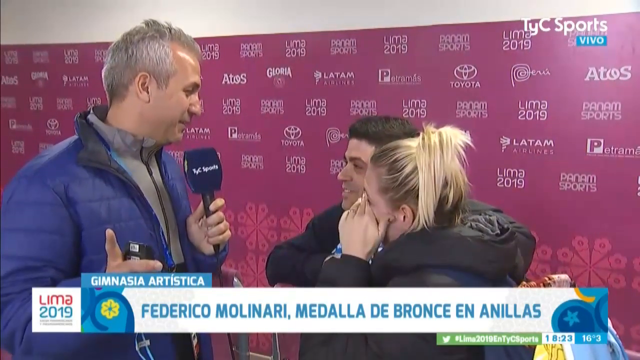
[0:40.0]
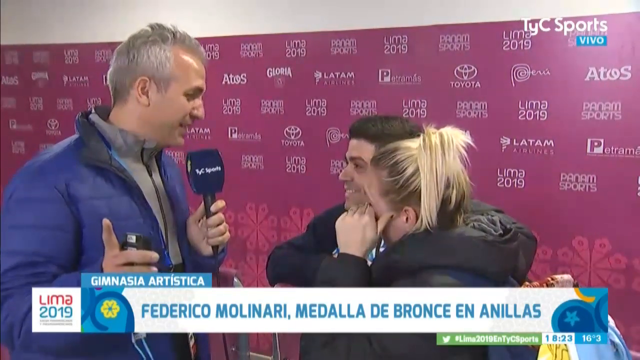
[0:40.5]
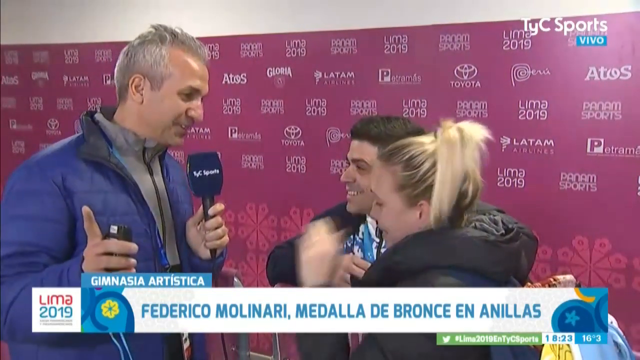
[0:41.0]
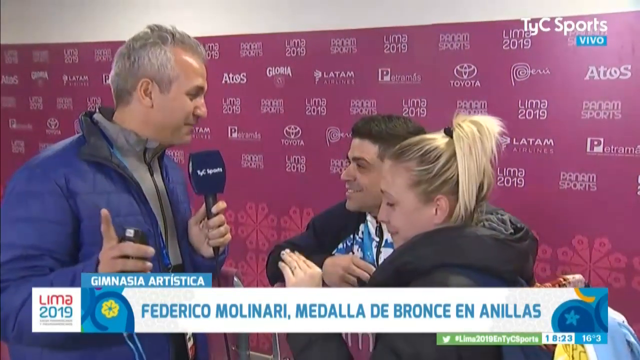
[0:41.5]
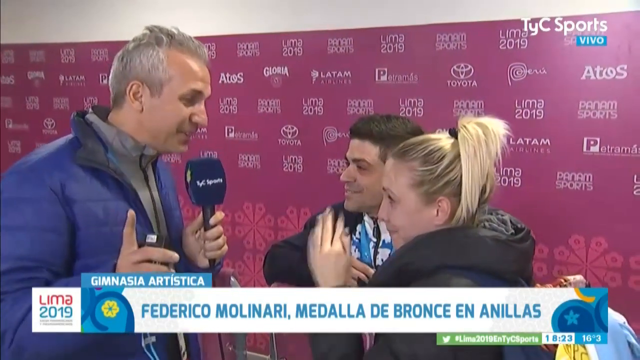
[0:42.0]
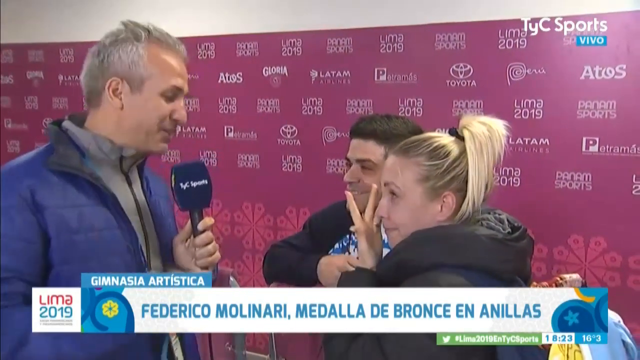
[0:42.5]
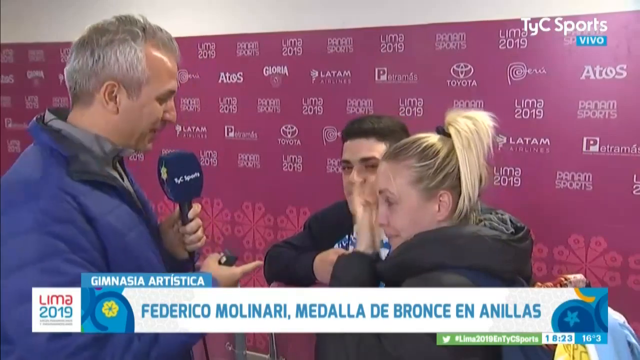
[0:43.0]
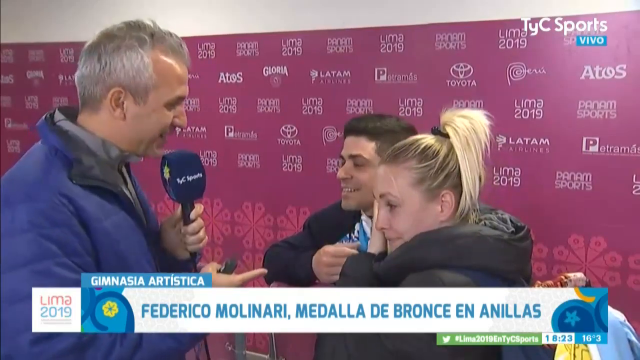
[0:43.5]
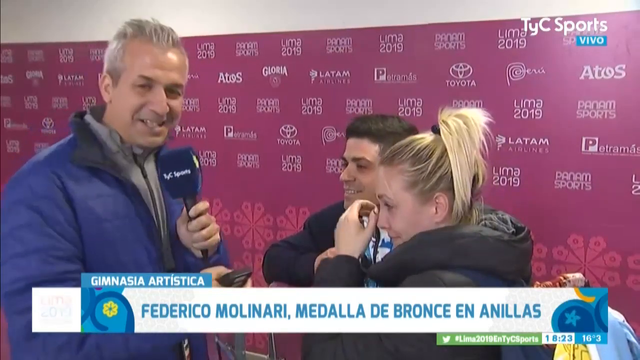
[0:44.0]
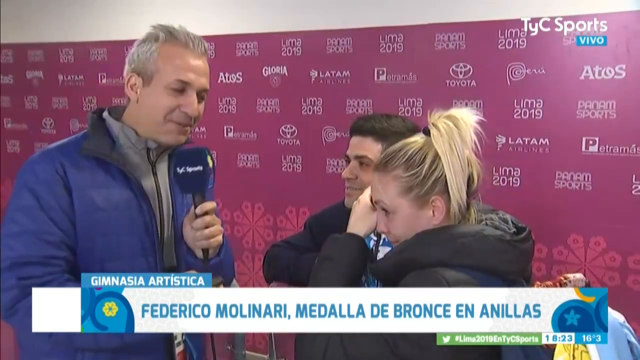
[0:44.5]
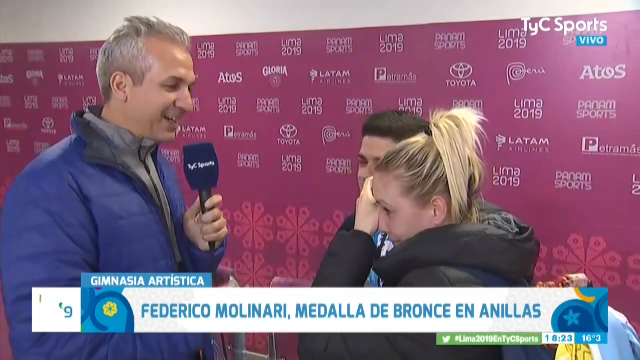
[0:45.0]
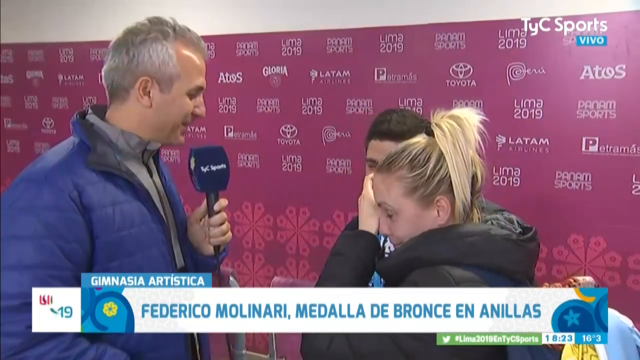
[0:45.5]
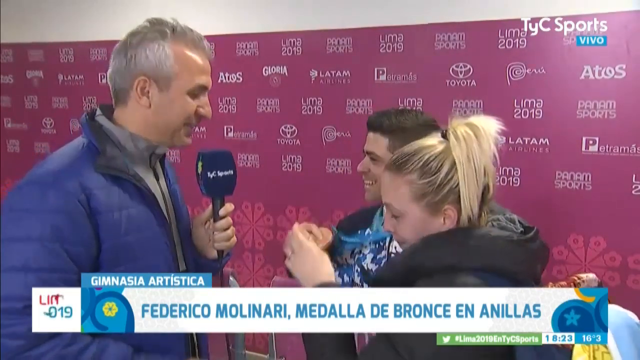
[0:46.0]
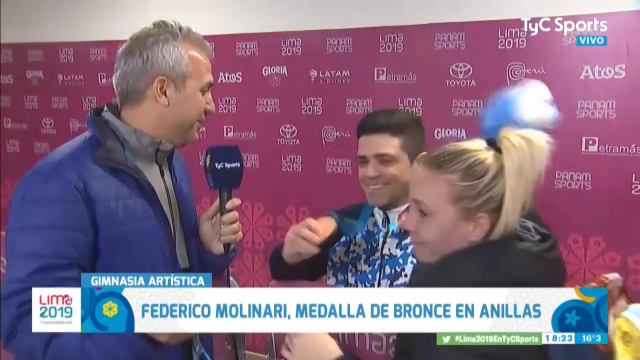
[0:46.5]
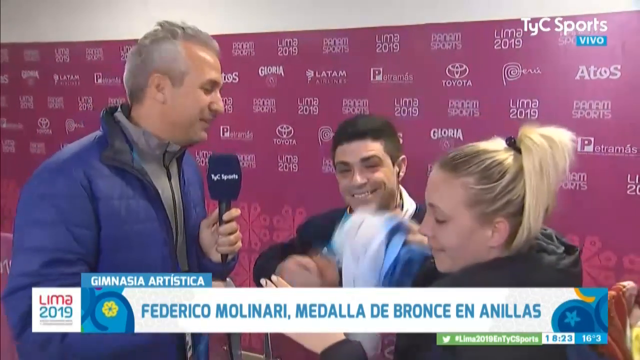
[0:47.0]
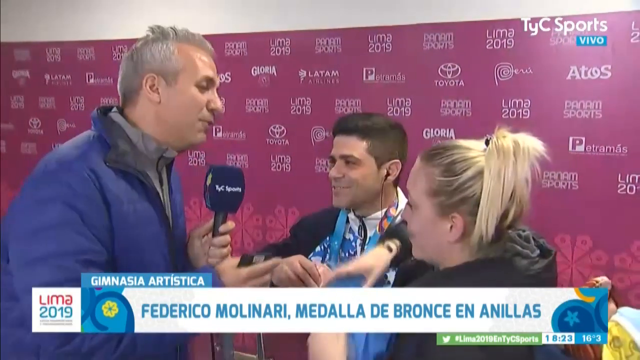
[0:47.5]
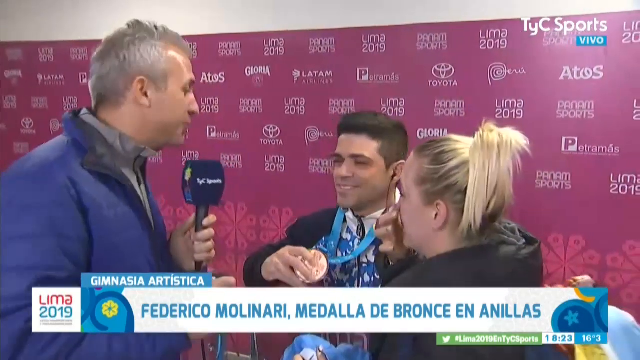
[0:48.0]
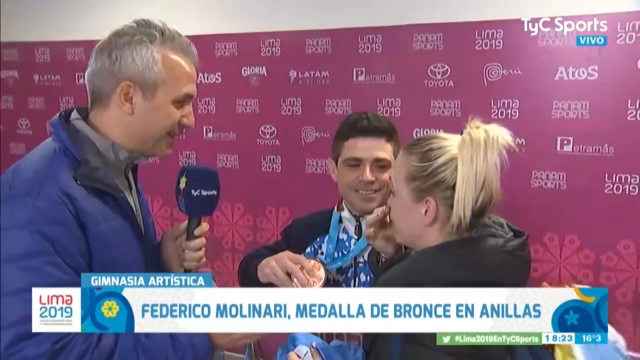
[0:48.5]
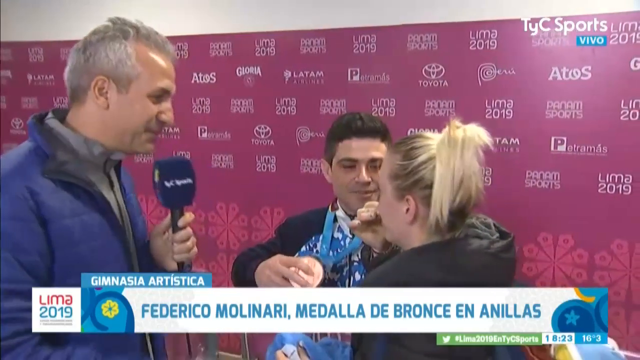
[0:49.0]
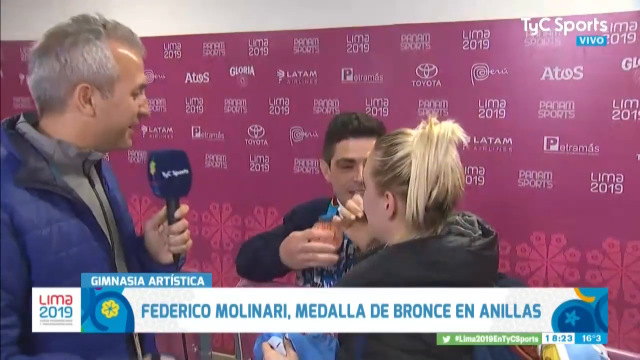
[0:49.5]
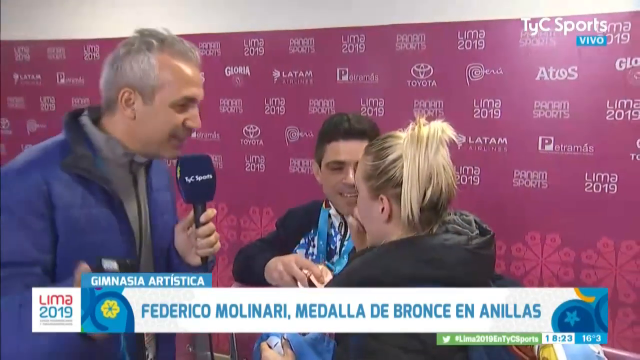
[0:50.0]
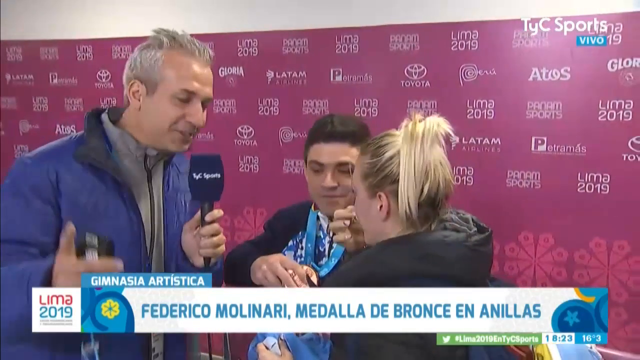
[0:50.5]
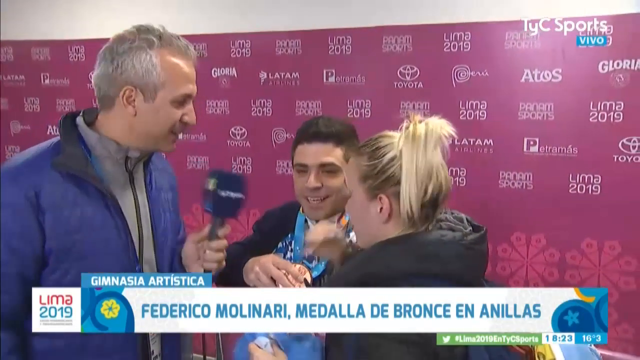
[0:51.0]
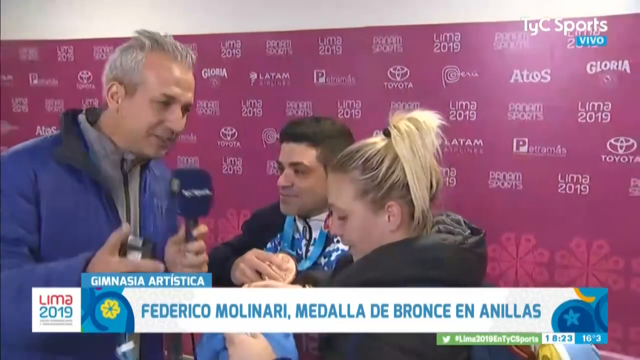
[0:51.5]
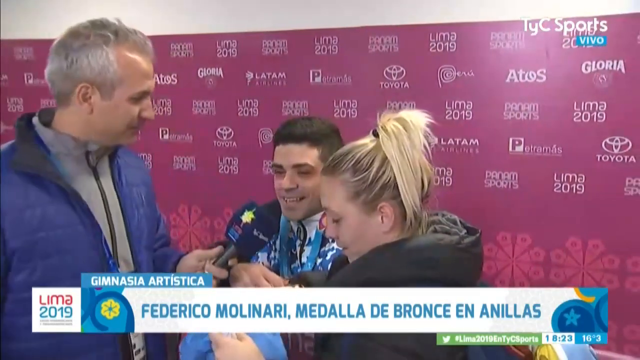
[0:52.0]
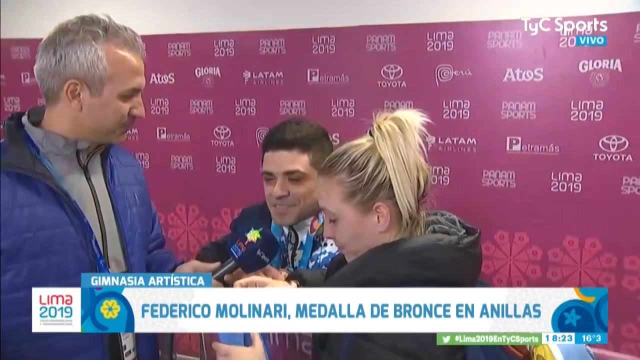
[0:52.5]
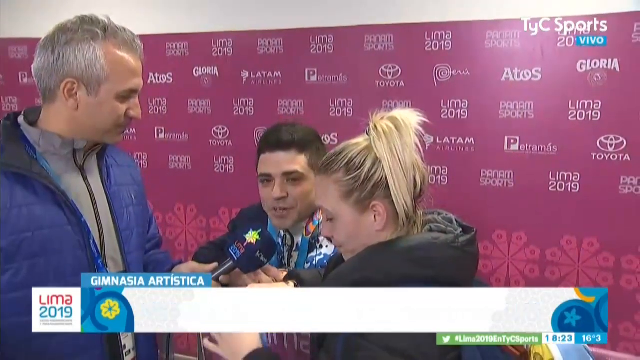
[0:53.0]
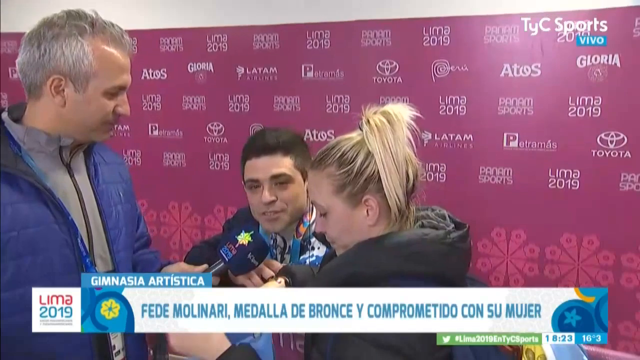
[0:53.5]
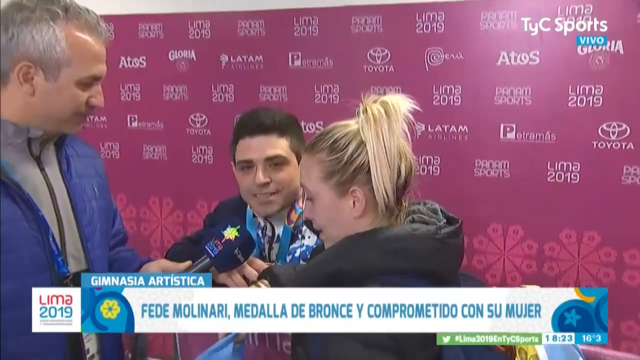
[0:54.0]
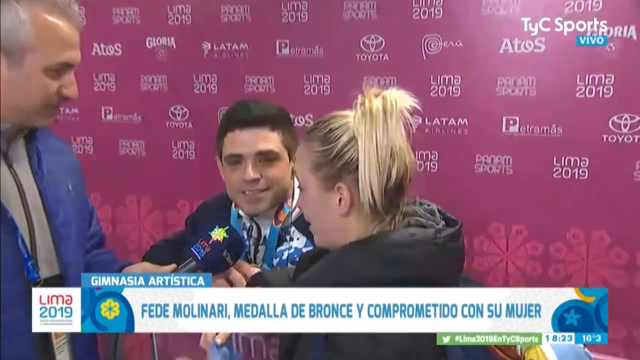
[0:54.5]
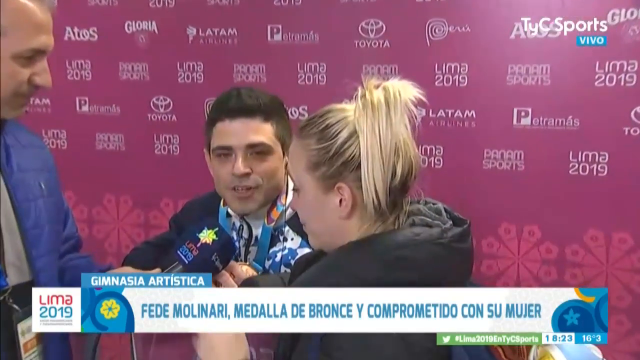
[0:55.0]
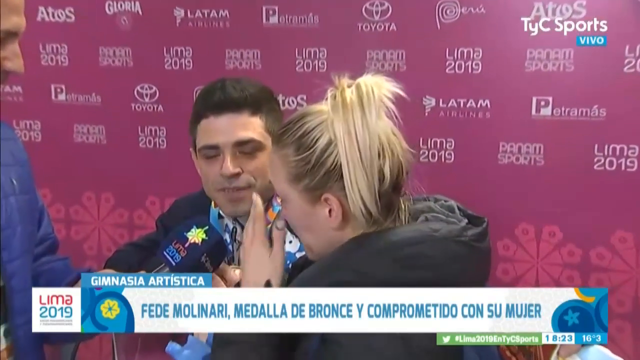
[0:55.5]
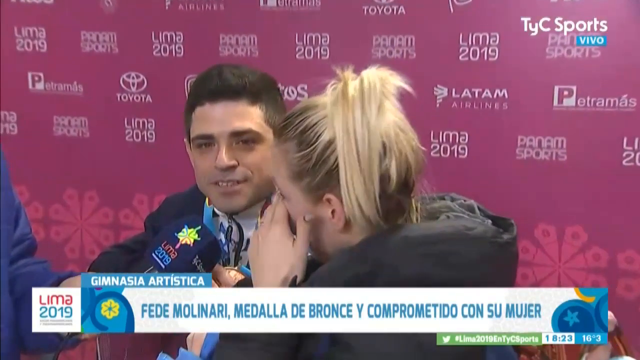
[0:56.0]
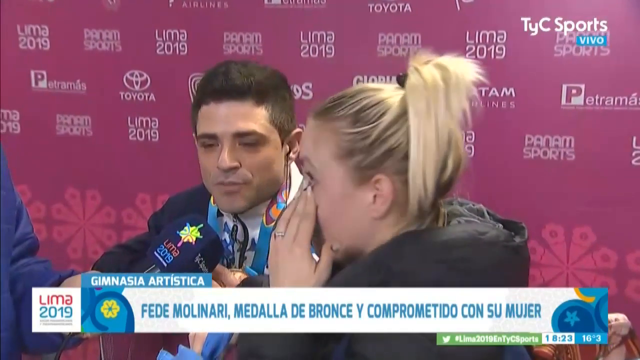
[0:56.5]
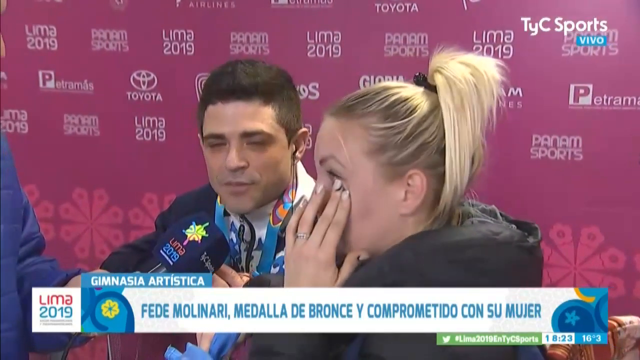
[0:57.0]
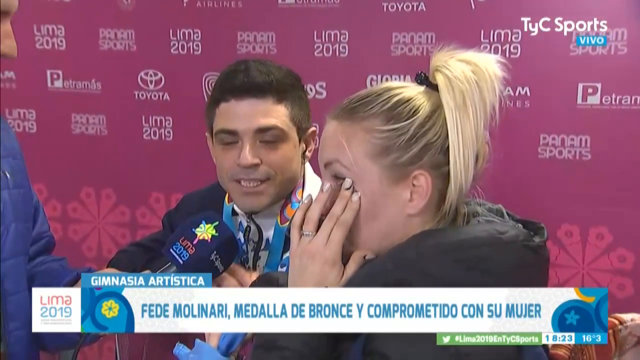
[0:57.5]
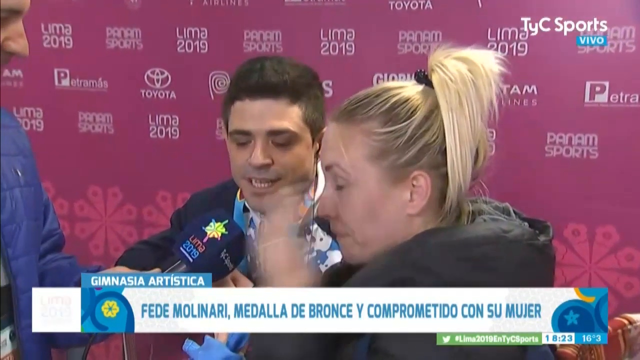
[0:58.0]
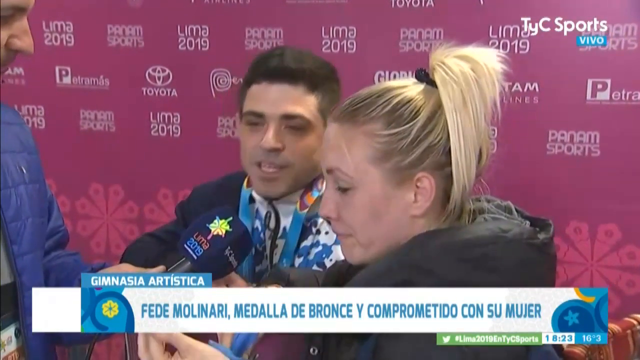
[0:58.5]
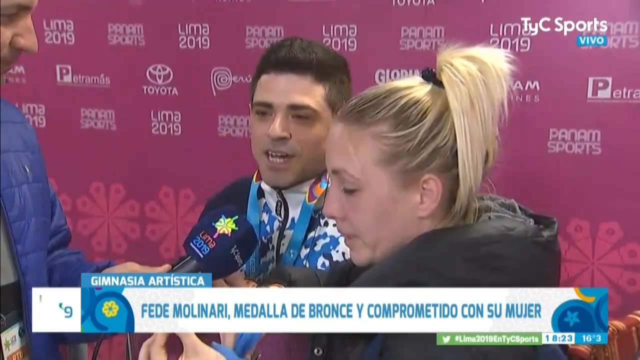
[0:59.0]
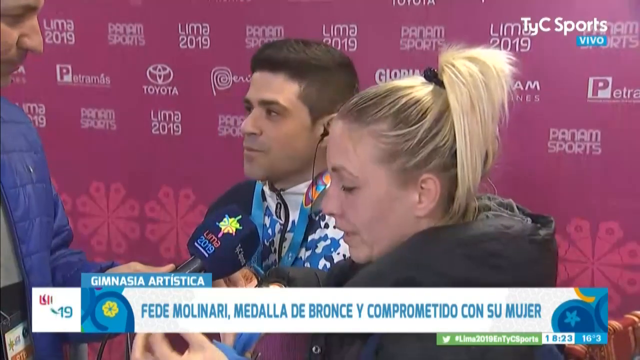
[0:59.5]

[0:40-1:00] A man is being interviewed. The interviewer, a tall man, stands to the left holding the microphone, while the man being interviewed stands behind a barrier with a gold medal in his hand; the medal hangs from a strap around his neck. He leans in to talk to the camera and looks very happy. A woman stands next to him, appearing to be his wife or girlfriend, and she wipes her eyes as she cries seemingly tears of joy. The banner behind them is a wall that says "Lima 2019." As he asks a question, the interviewer puts the microphone down to the man, who has a huge smile on his face. Besides the gold medal, he also seems to be holding some type of trophy in his hand.